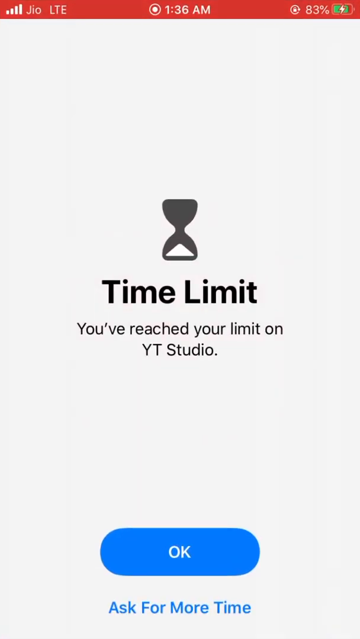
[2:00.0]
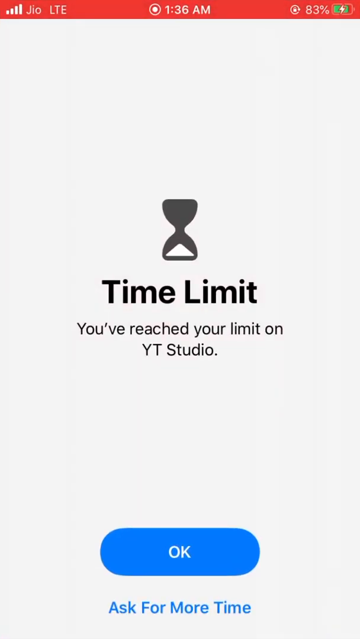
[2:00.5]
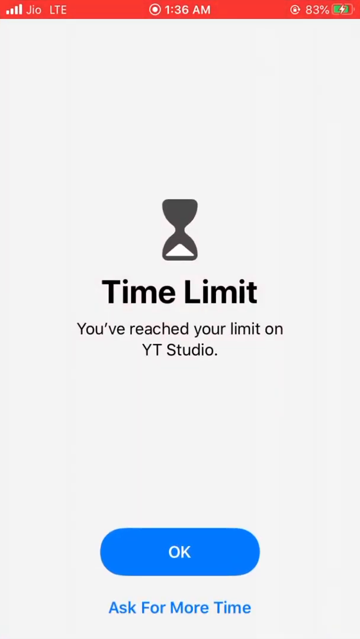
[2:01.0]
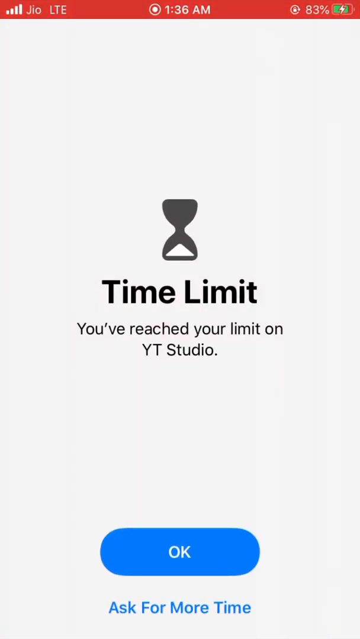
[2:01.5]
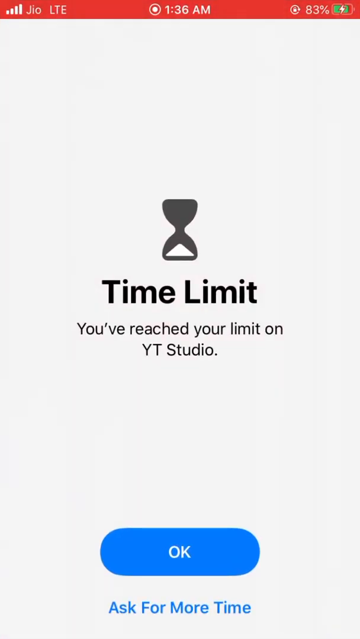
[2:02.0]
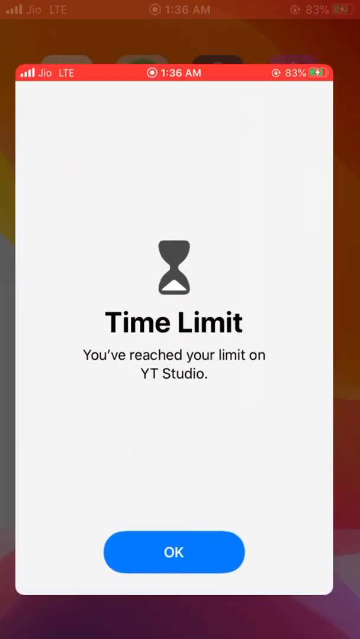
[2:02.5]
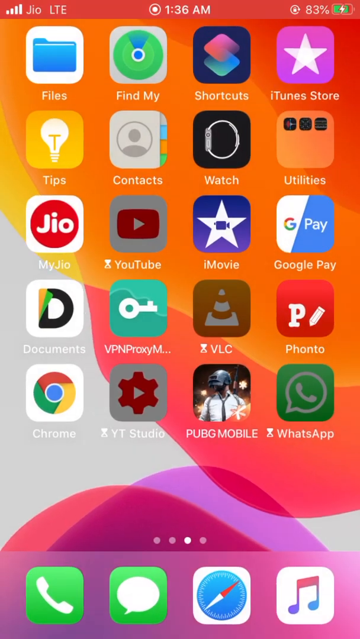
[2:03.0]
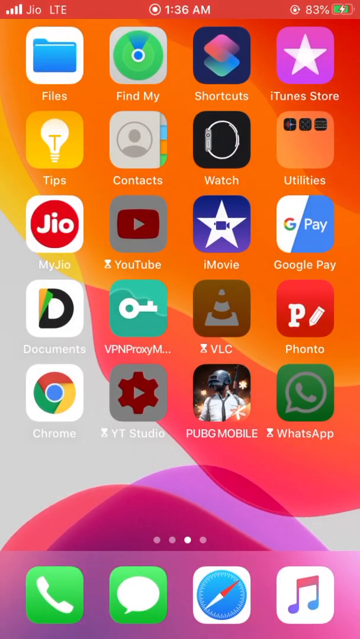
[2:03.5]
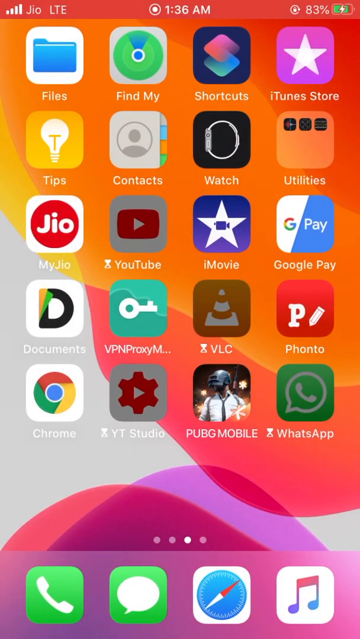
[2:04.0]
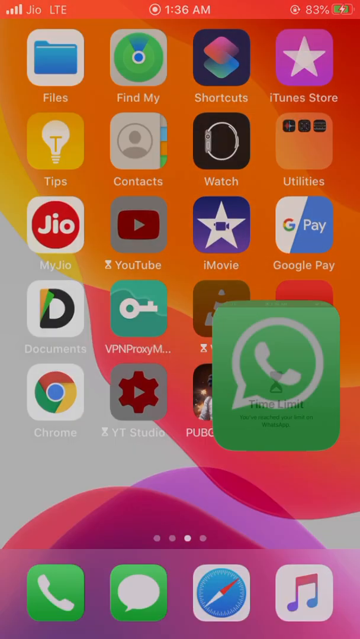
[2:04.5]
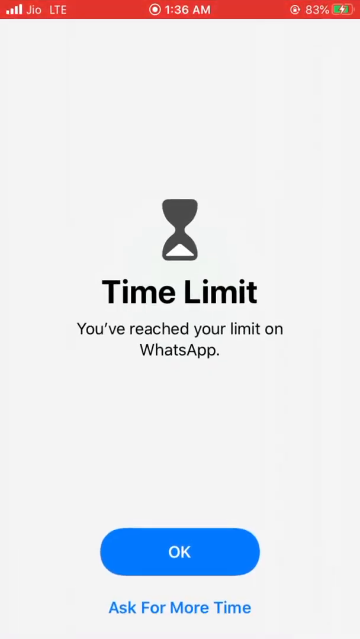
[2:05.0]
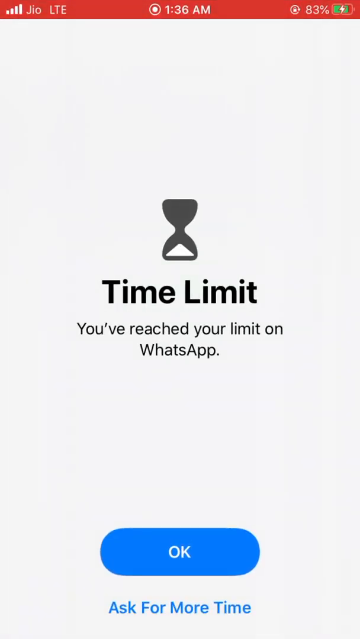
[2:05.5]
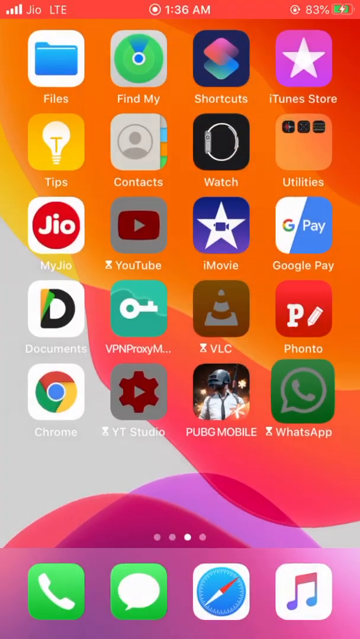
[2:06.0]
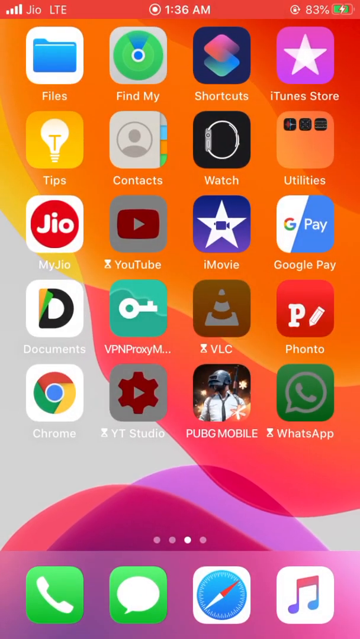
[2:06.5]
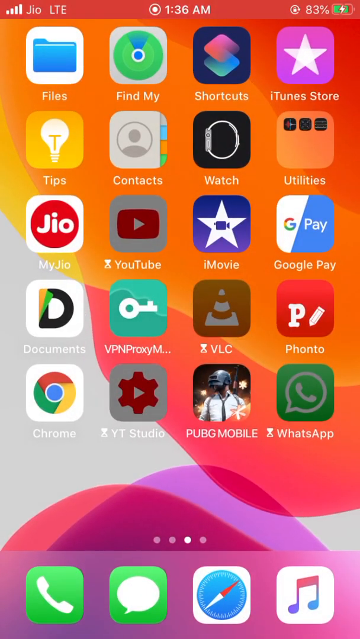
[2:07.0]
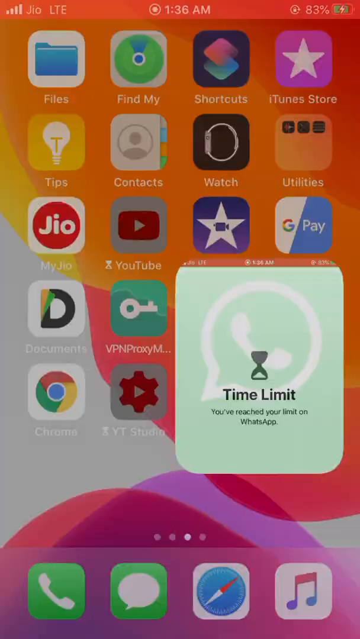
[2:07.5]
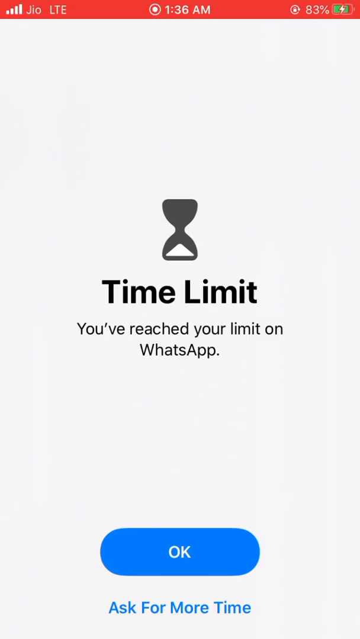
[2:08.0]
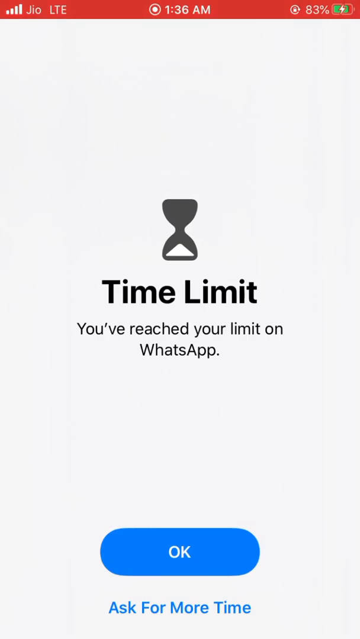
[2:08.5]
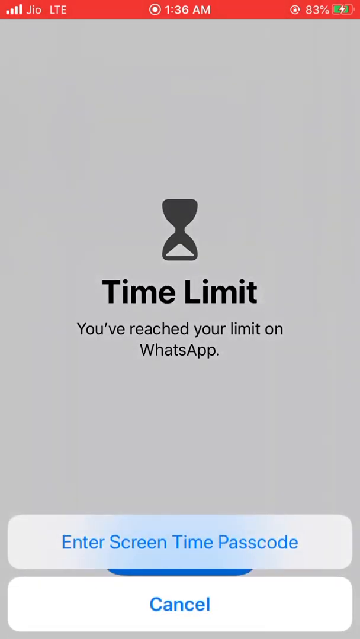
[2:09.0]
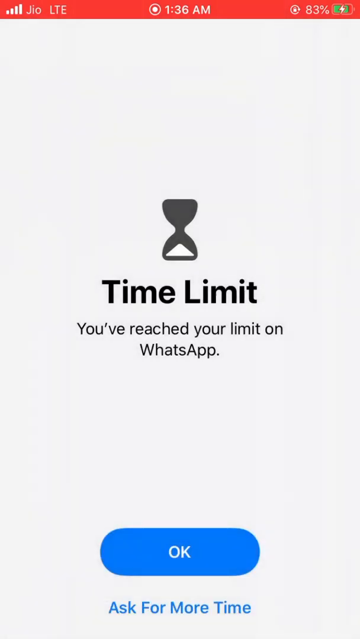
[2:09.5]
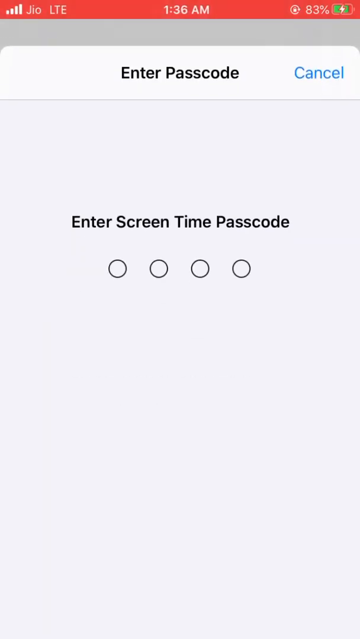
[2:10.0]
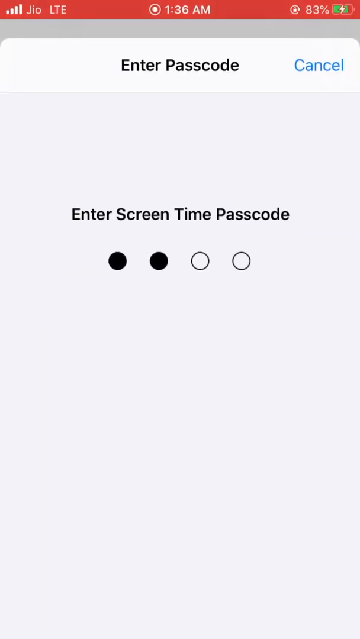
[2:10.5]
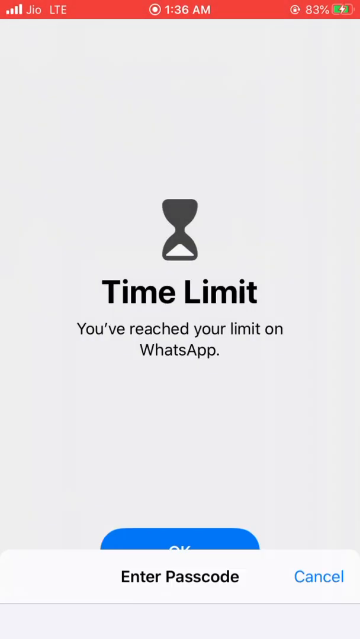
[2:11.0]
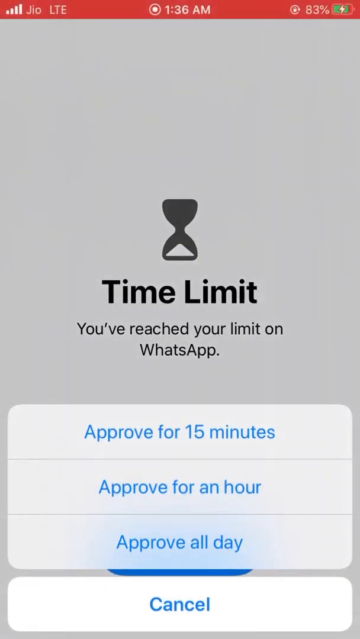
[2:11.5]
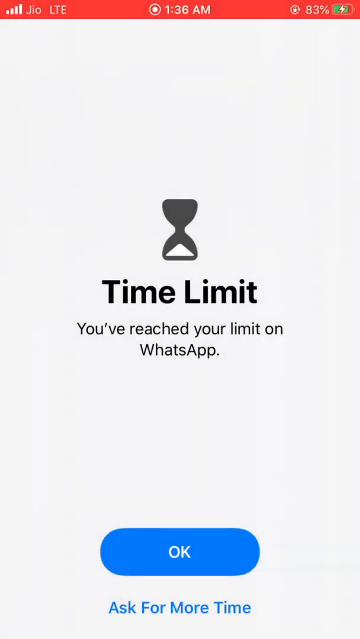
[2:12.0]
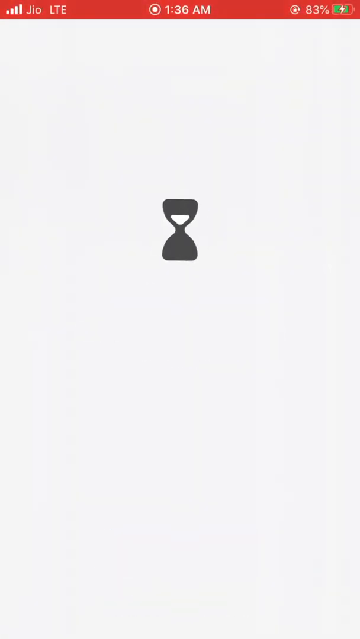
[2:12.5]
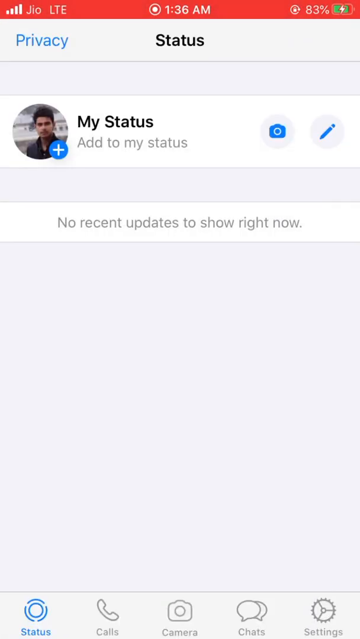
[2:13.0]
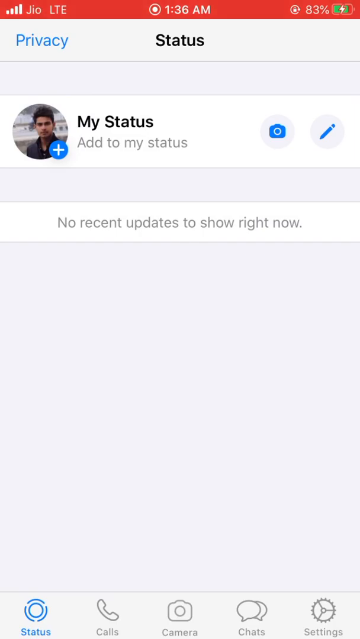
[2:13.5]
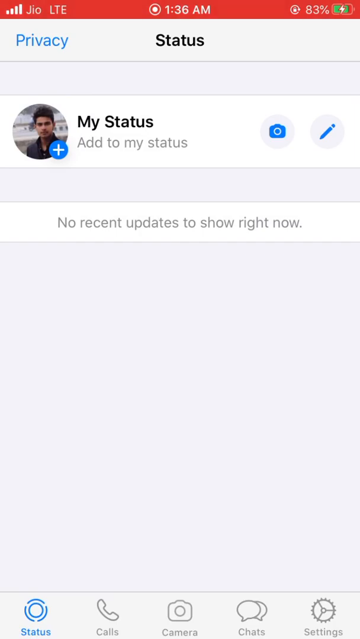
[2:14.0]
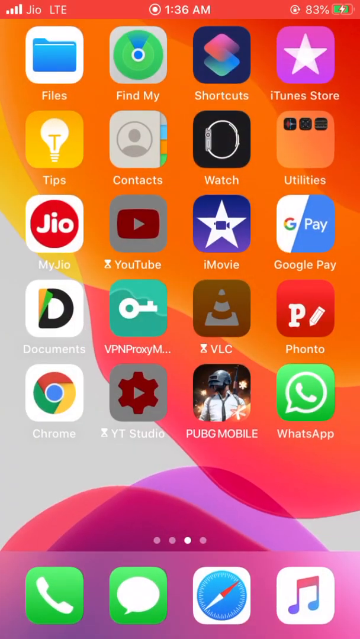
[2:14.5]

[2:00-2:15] The user taps YouTube Studio, which also has a time limit set, and the hourglass shows the sand at the bottom. They exit without adding time. Next they tap WhatsApp, which also shows a time limit. They exit, tap it again, and choose to add time, entering their screen code. The approval options of 15 minutes, an hour, or all day appear; which one they choose is not clear, but the app opens. Inside WhatsApp, the profile picture and my status are visible along with the option to add a status, and below that the text "no recent updates to show right now". The user then exits WhatsApp.